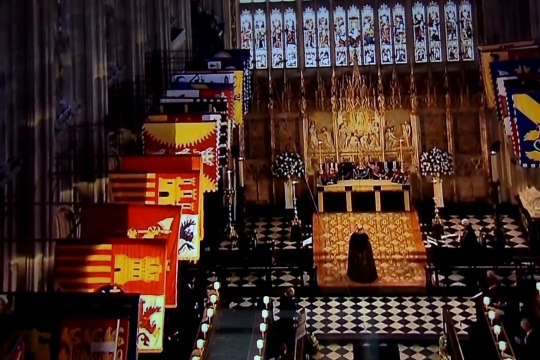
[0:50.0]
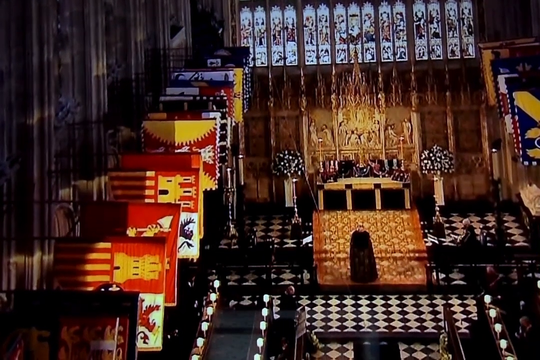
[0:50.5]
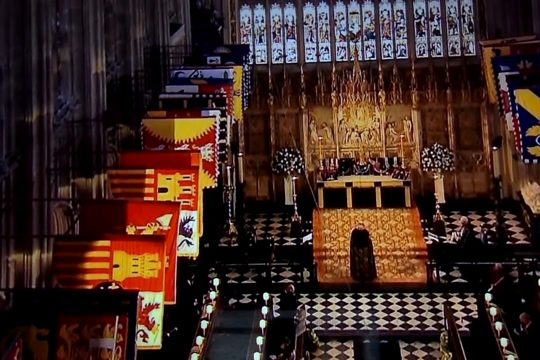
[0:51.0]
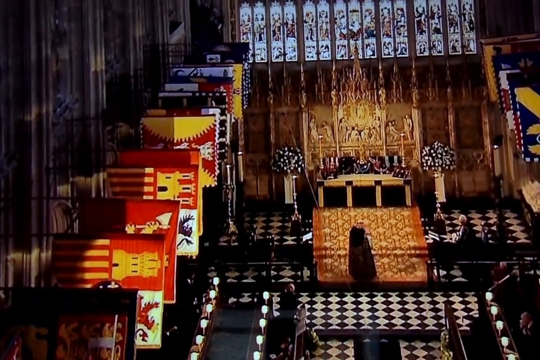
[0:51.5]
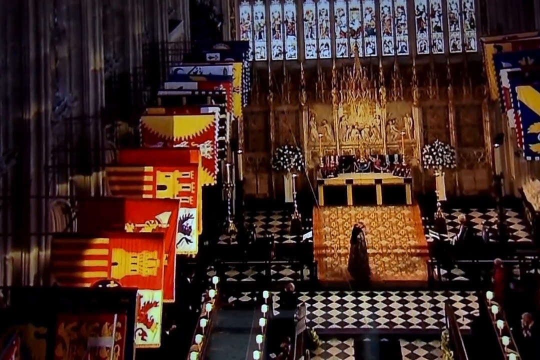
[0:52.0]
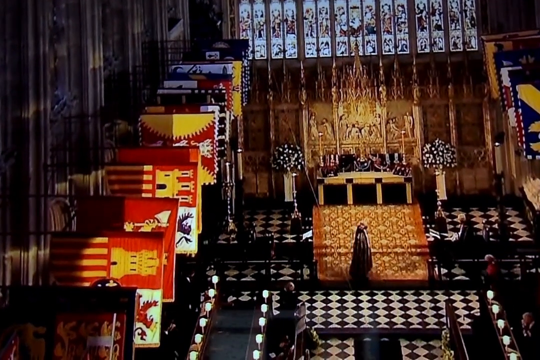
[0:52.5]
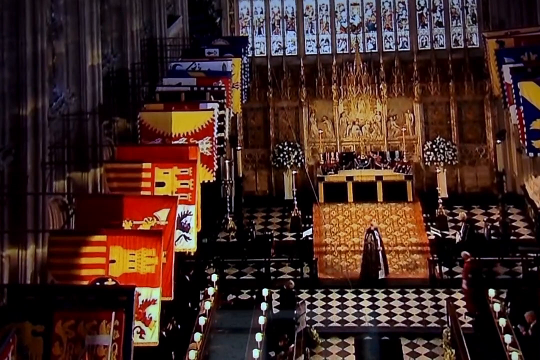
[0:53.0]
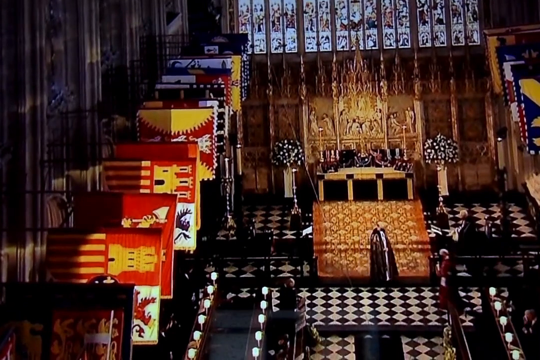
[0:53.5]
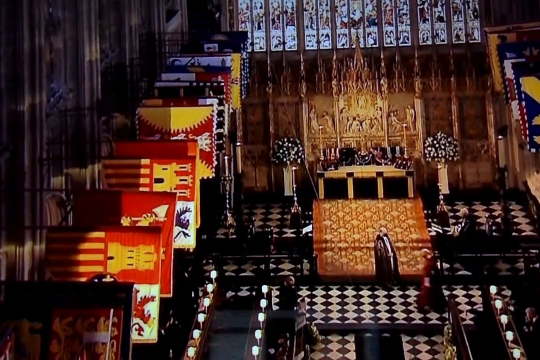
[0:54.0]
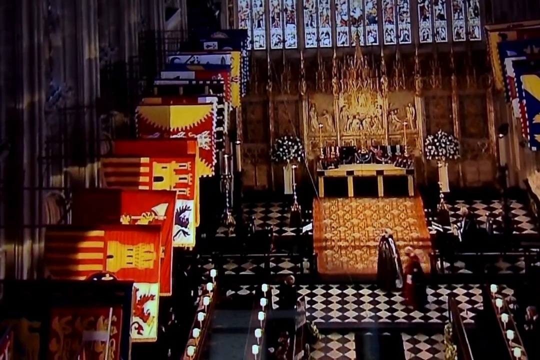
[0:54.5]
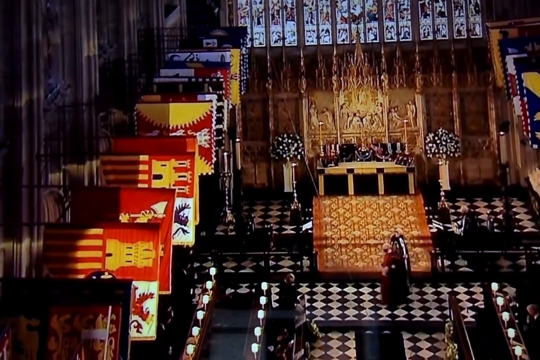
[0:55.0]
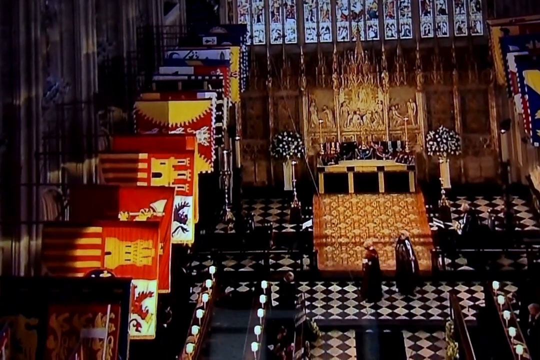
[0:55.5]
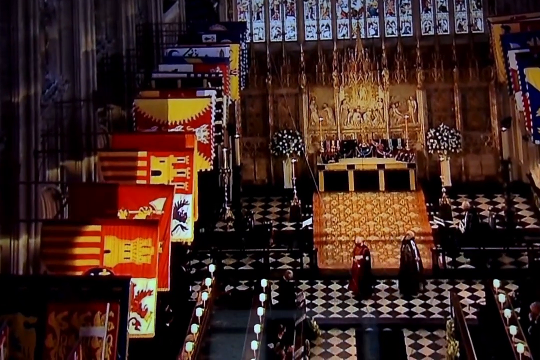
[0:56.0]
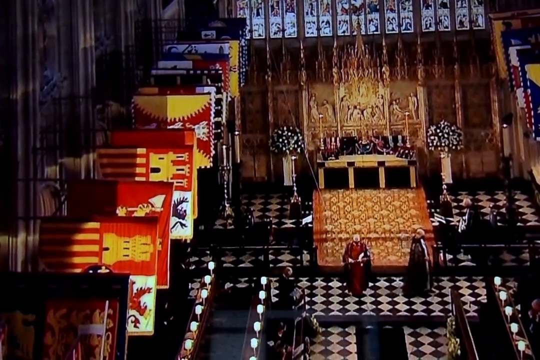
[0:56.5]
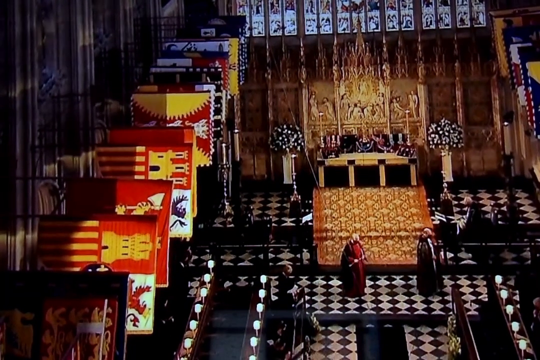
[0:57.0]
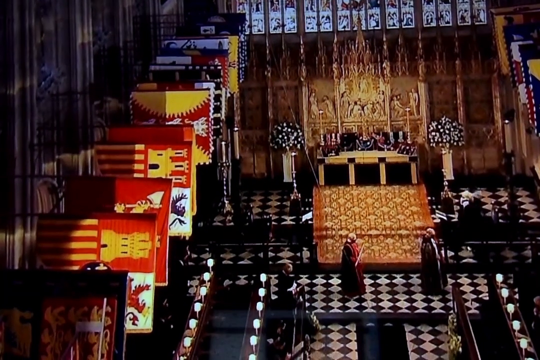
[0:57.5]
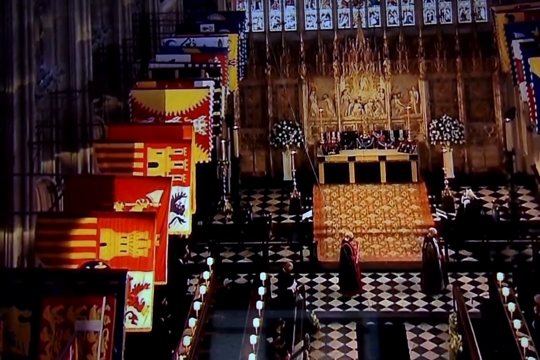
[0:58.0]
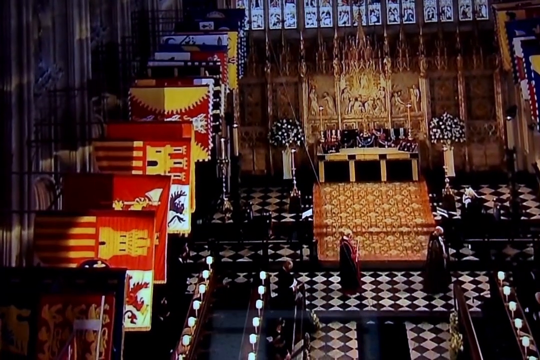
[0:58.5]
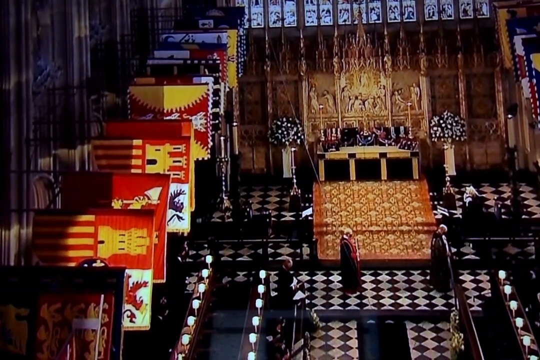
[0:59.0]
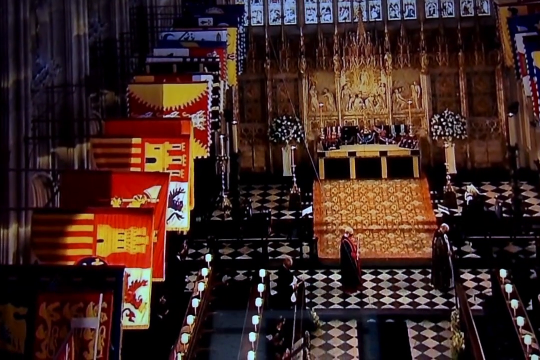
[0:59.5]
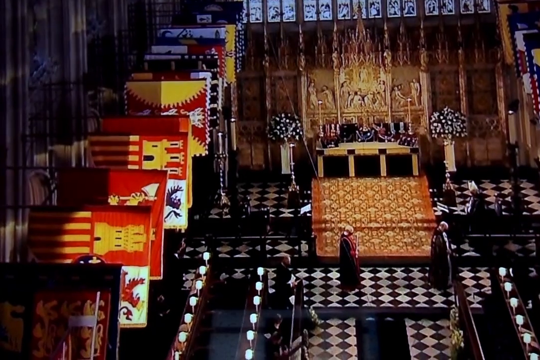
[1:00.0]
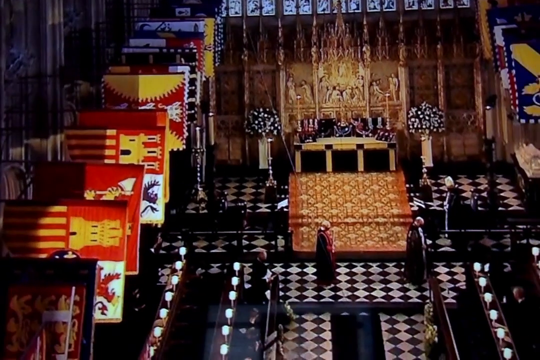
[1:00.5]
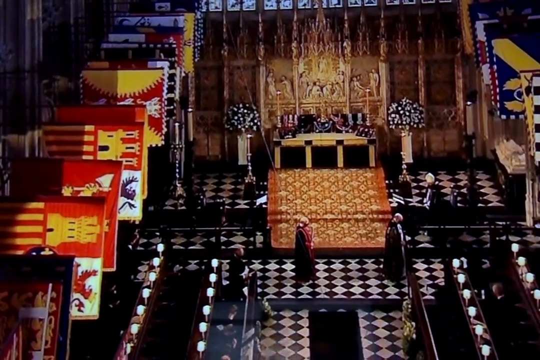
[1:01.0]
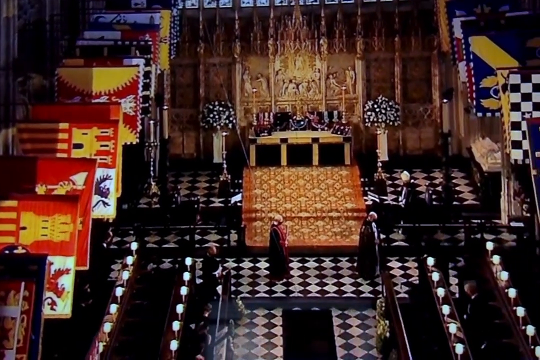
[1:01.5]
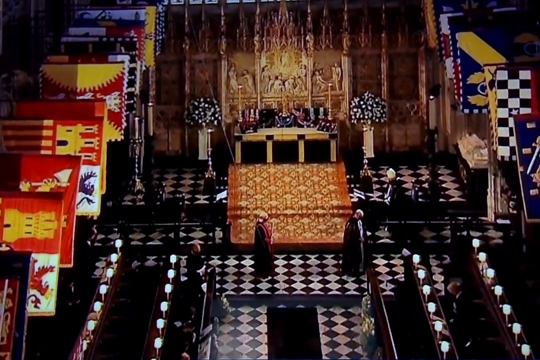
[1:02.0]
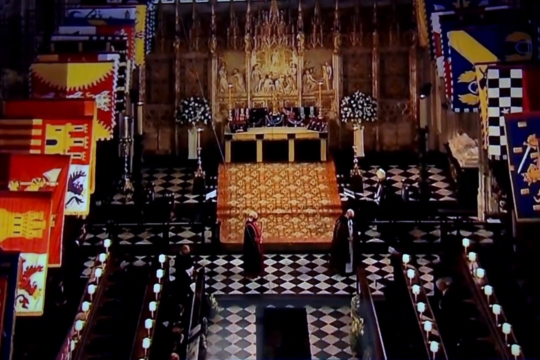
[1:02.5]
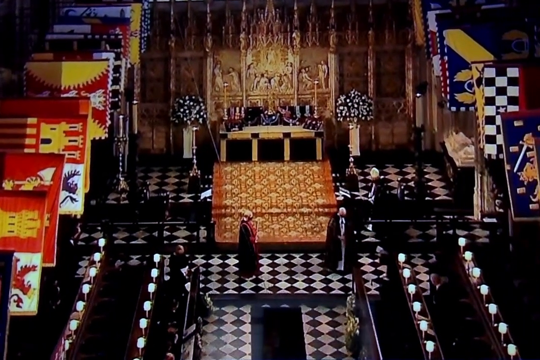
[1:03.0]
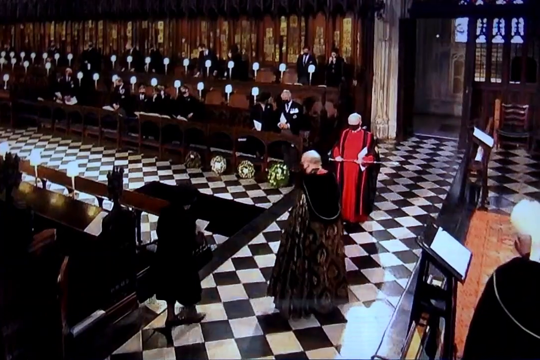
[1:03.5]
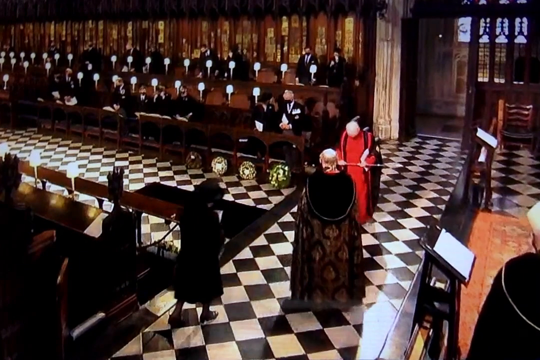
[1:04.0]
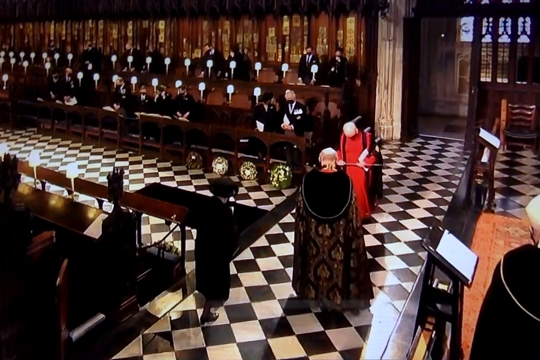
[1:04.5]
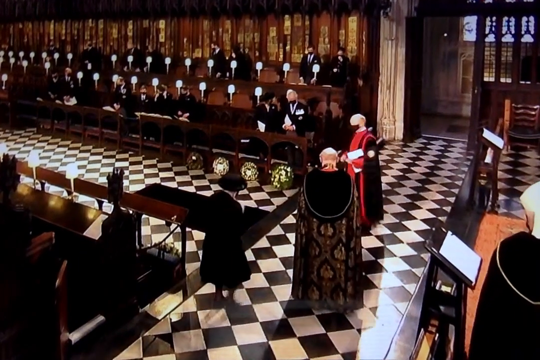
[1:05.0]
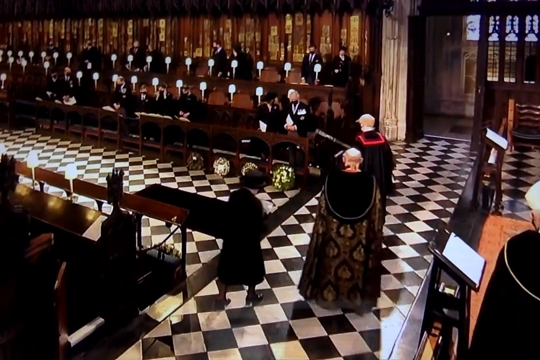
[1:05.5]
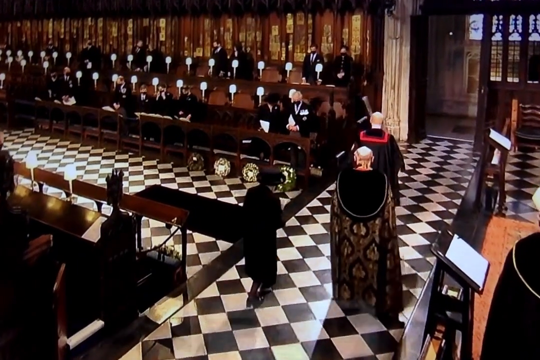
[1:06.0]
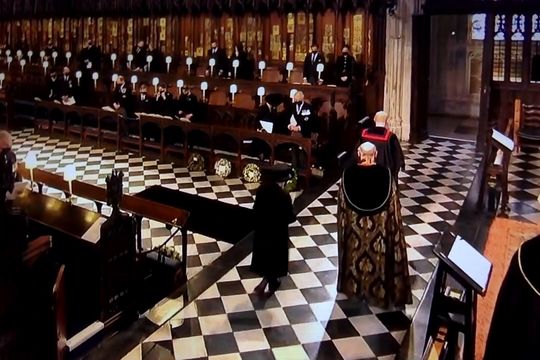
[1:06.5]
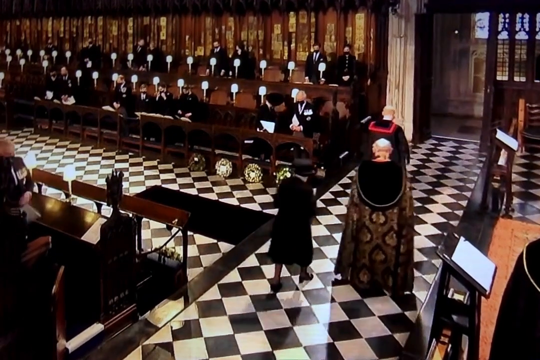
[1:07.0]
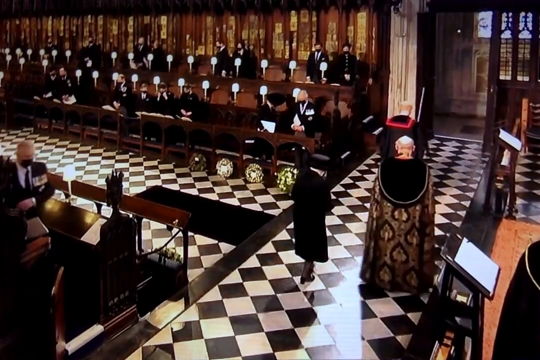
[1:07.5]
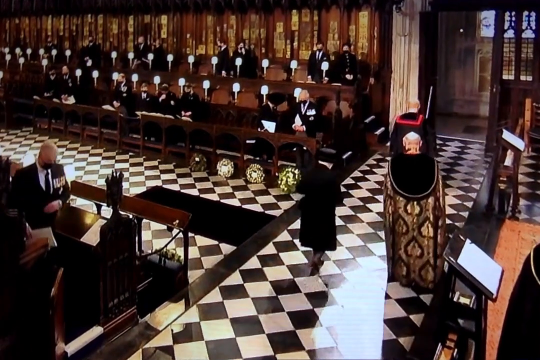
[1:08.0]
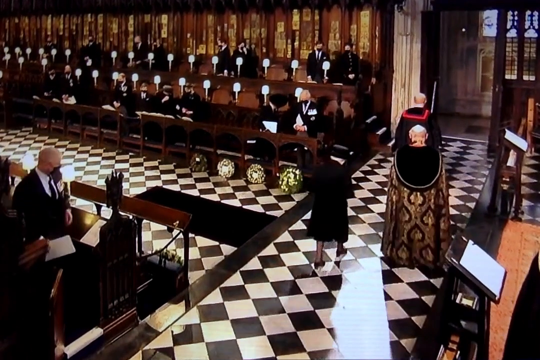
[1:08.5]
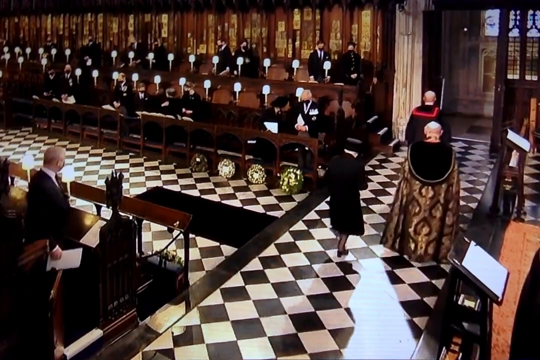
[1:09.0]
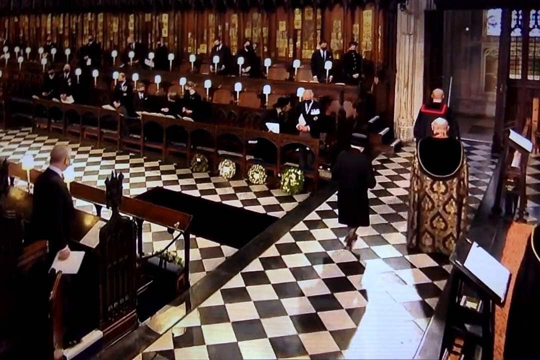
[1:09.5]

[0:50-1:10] The inside of what looks like a church has a bunch of flags of different colors on the wall; they do not seem to be flags of countries. A person dressed somewhat like a priest is in front of the church, and another man walks right by him, wearing a red robe and holding what appears to be a sword. He bows, ducking his head down, then turns and goes the other direction, with two people following him. Both wear robes, and one of them is gold colored. As they walk they seem to be exiting the building, and an exit with a hall is visible.